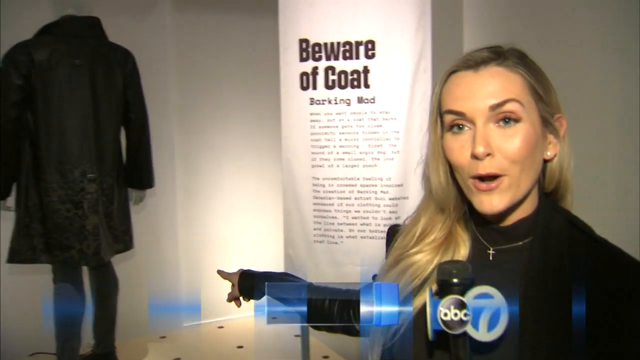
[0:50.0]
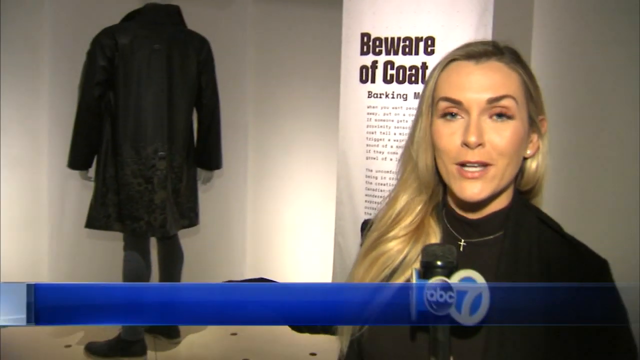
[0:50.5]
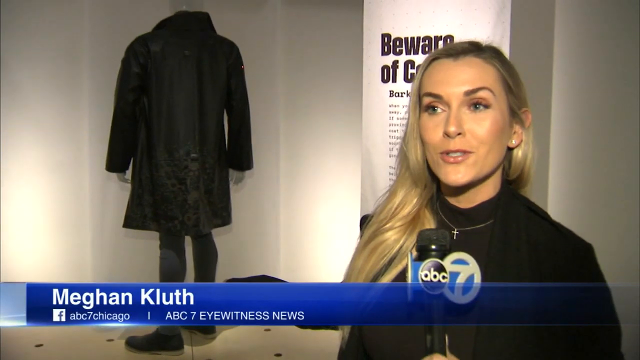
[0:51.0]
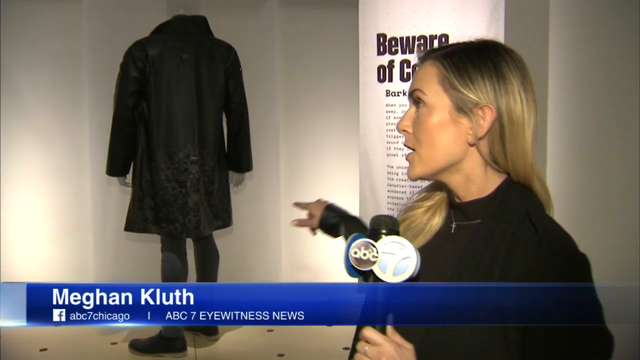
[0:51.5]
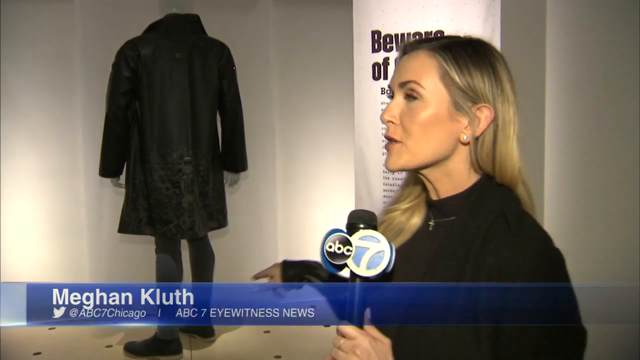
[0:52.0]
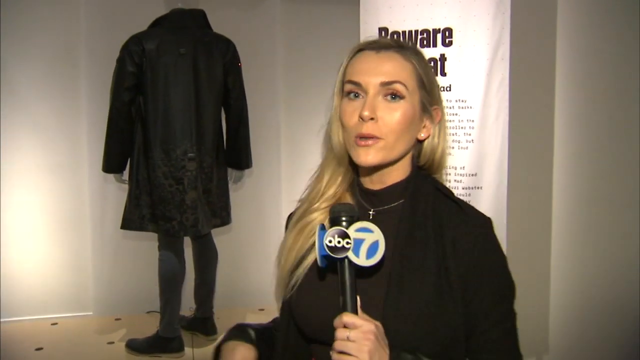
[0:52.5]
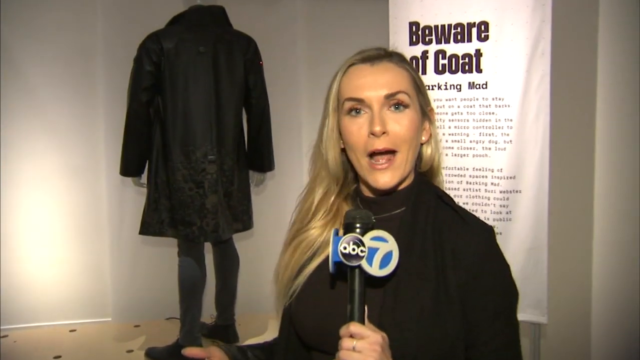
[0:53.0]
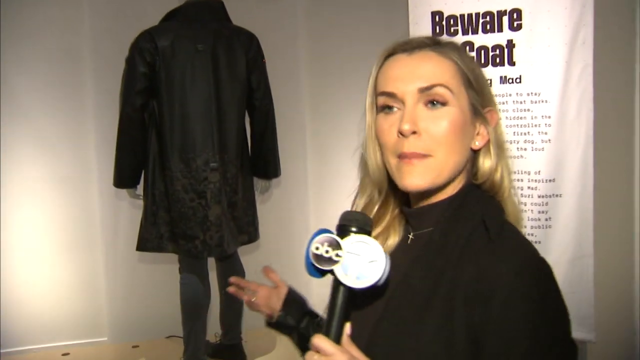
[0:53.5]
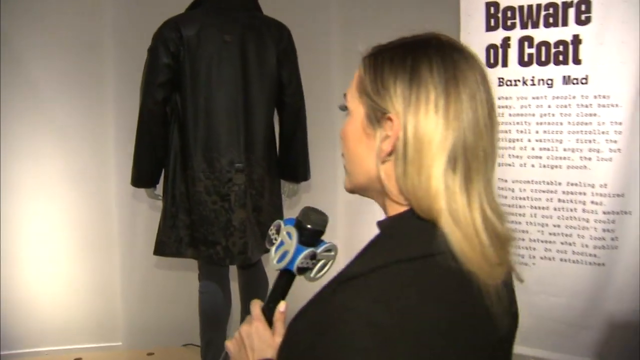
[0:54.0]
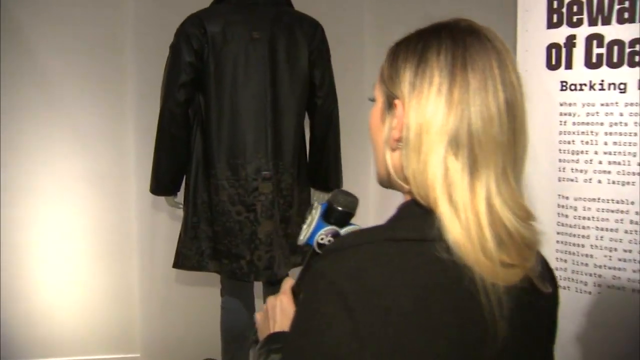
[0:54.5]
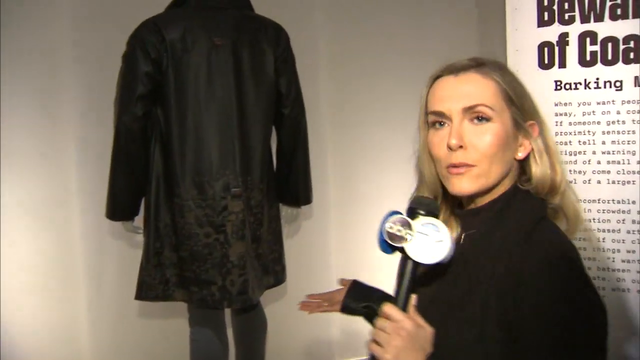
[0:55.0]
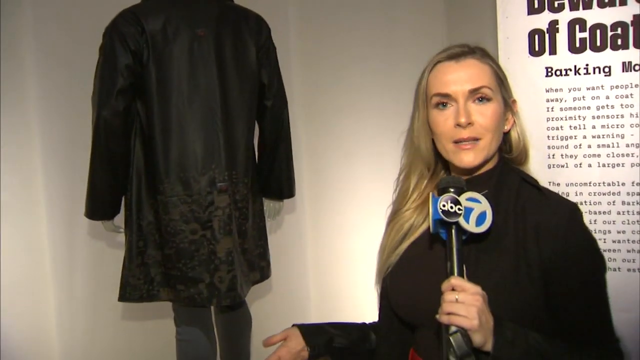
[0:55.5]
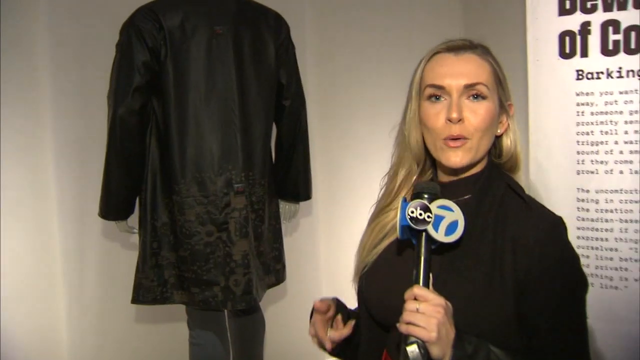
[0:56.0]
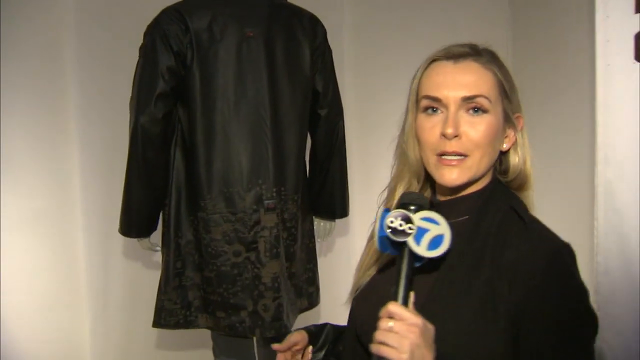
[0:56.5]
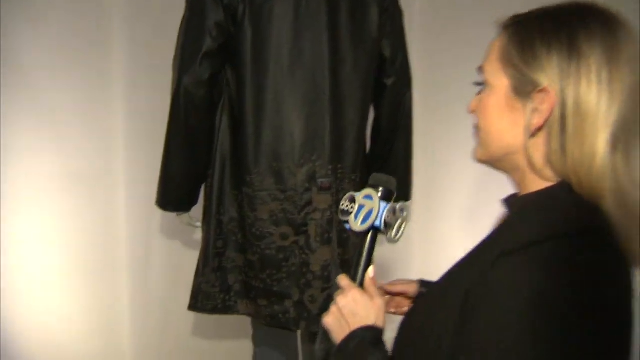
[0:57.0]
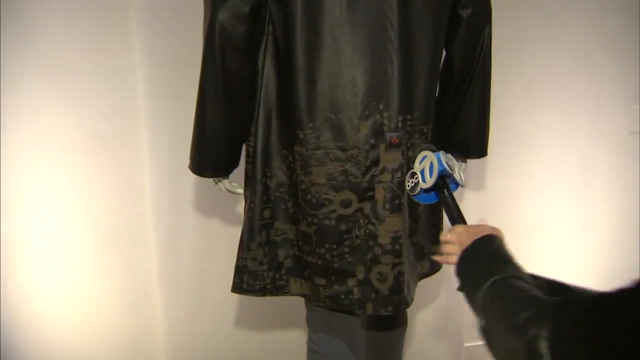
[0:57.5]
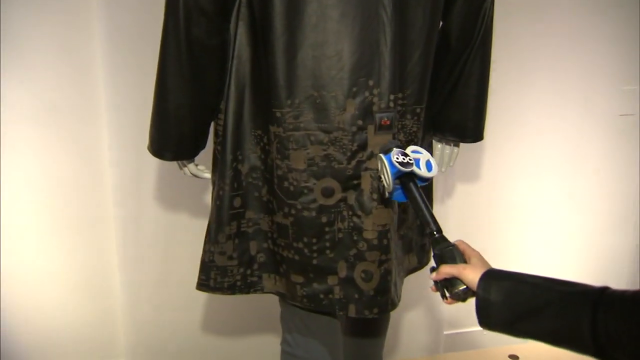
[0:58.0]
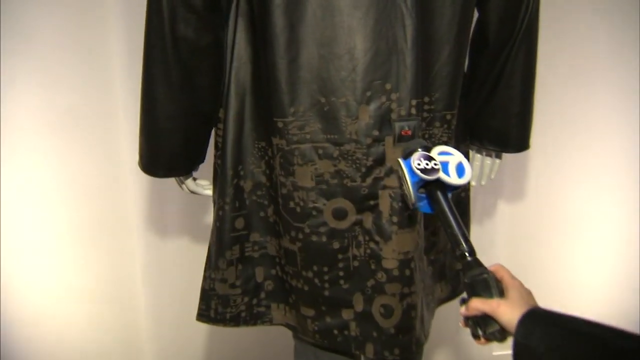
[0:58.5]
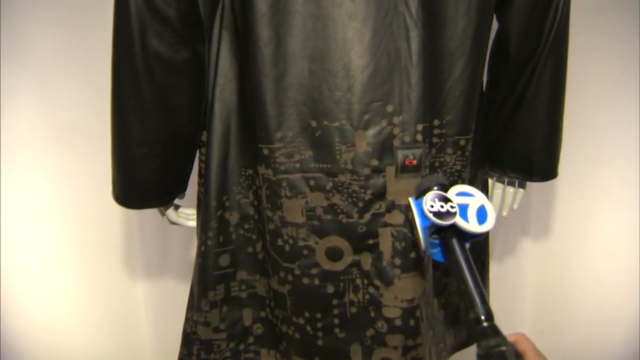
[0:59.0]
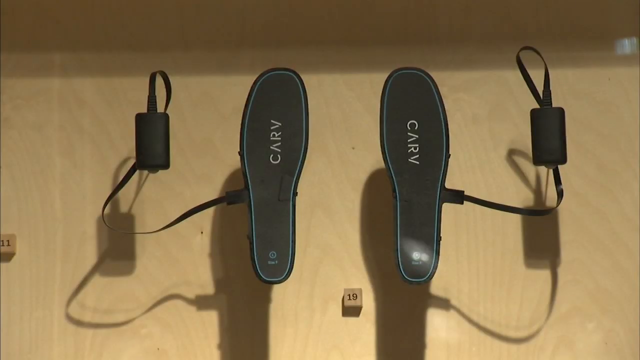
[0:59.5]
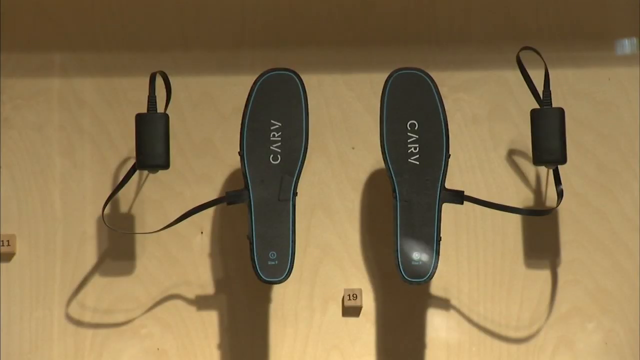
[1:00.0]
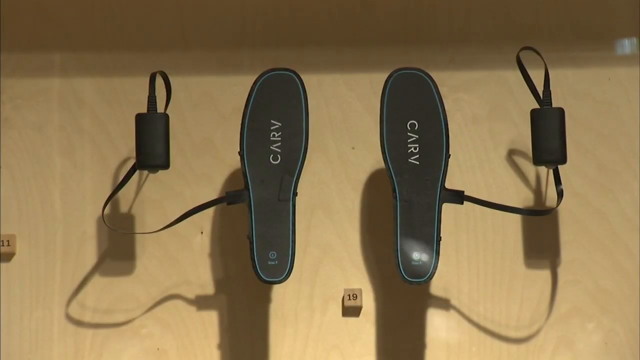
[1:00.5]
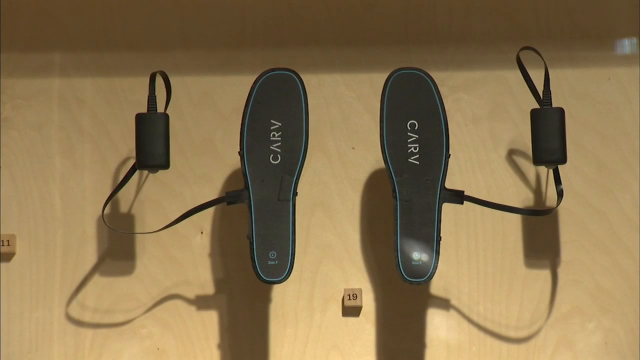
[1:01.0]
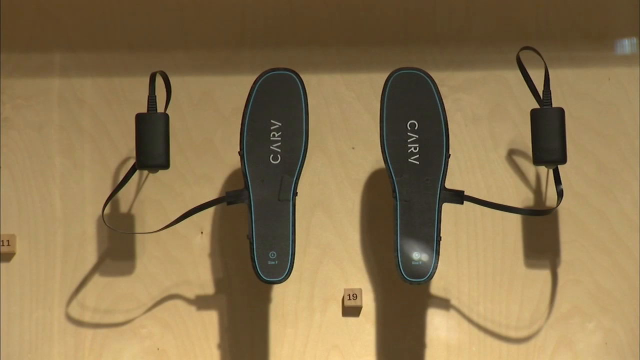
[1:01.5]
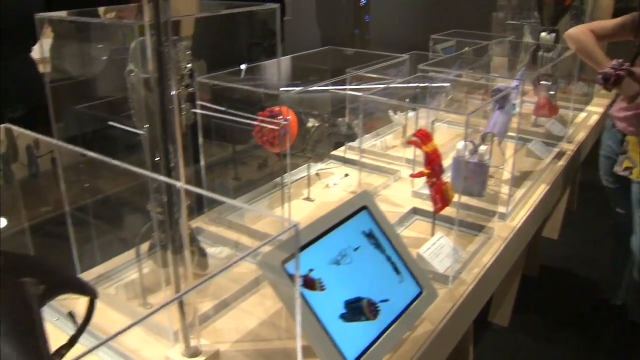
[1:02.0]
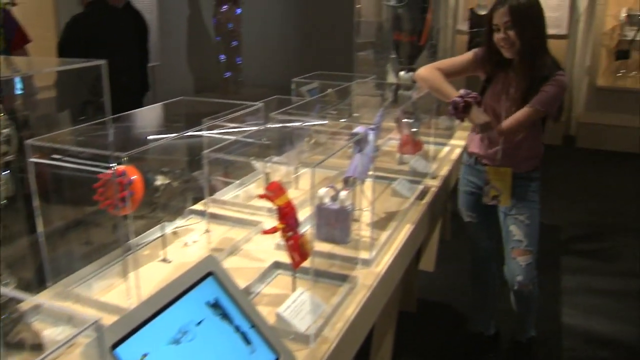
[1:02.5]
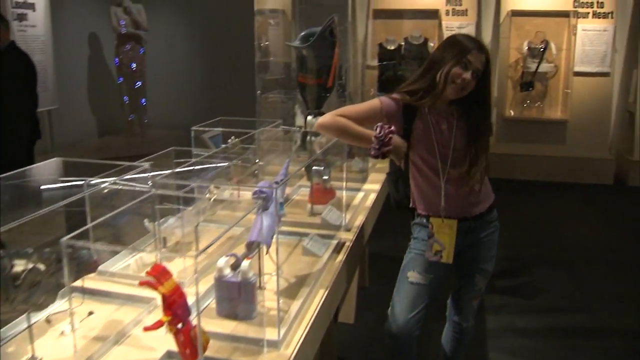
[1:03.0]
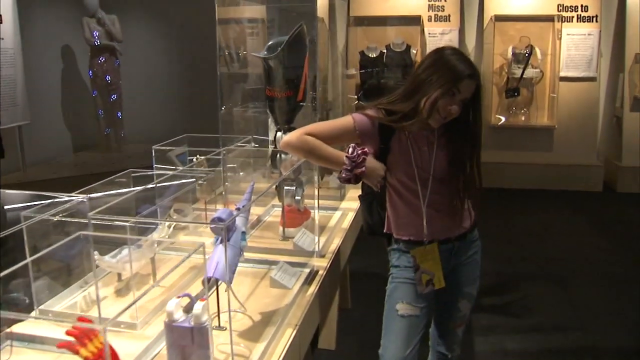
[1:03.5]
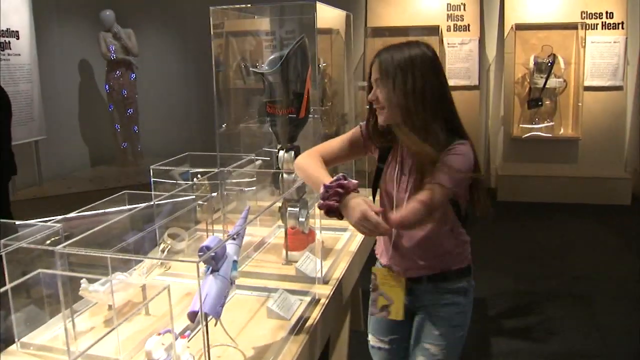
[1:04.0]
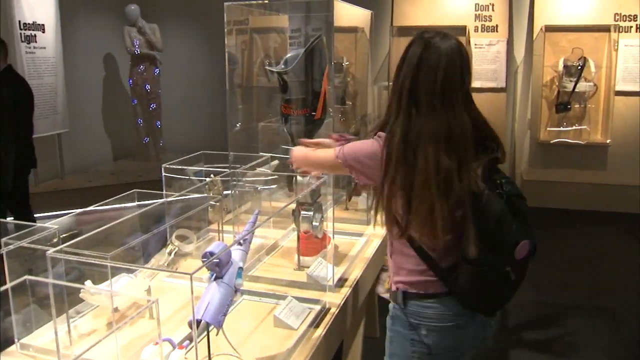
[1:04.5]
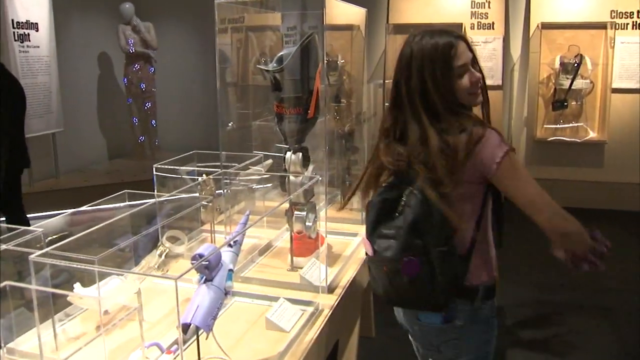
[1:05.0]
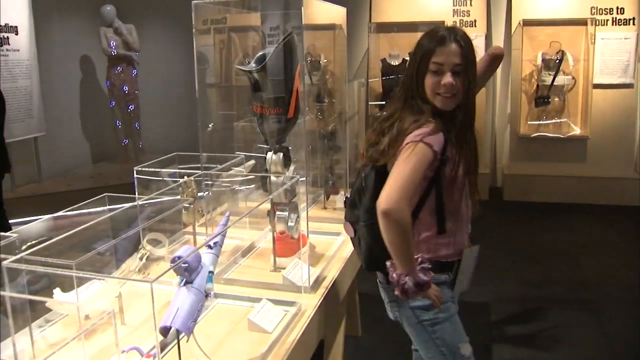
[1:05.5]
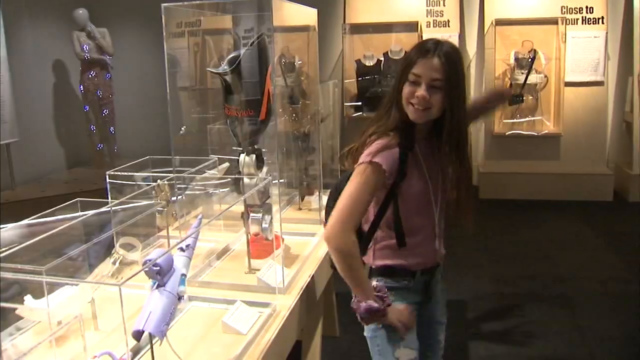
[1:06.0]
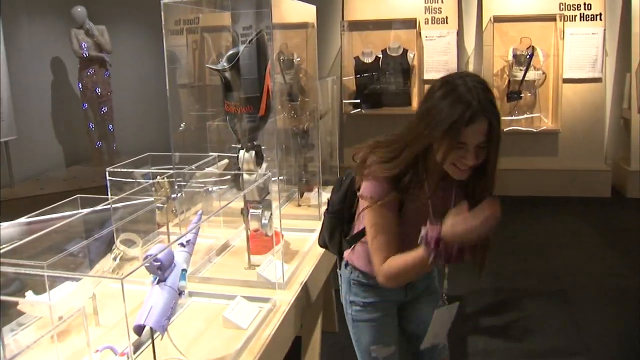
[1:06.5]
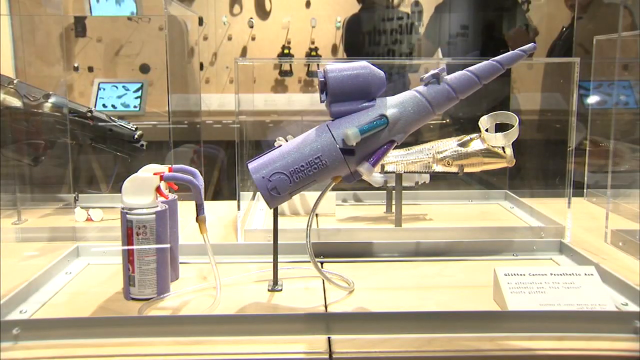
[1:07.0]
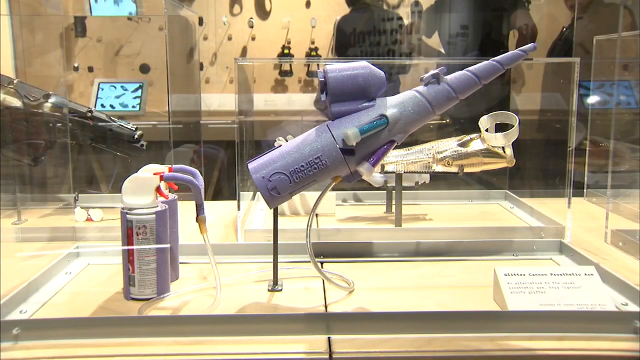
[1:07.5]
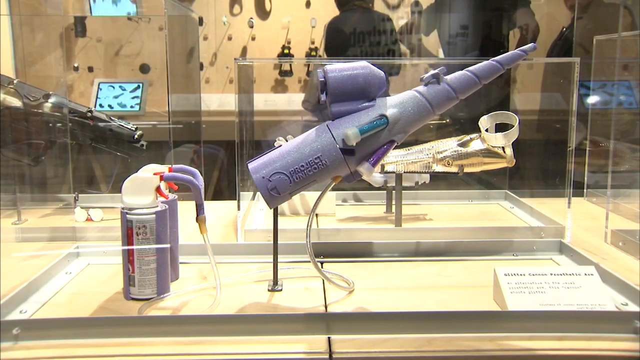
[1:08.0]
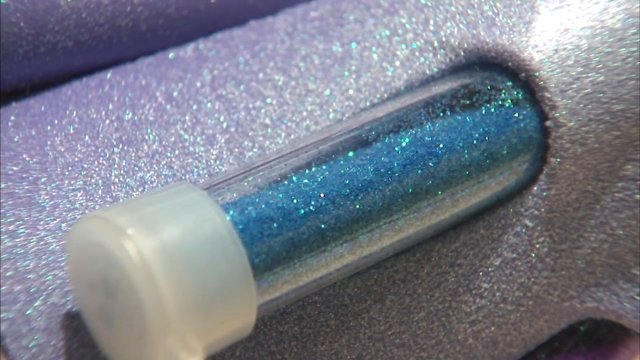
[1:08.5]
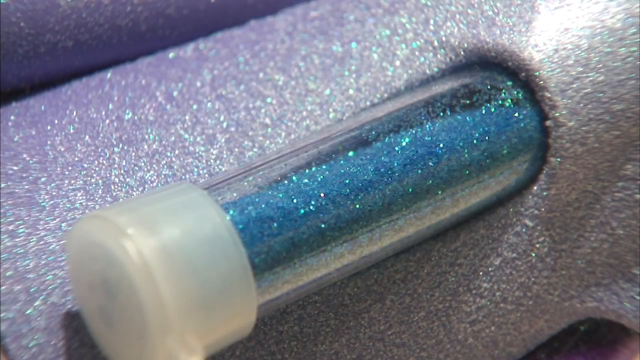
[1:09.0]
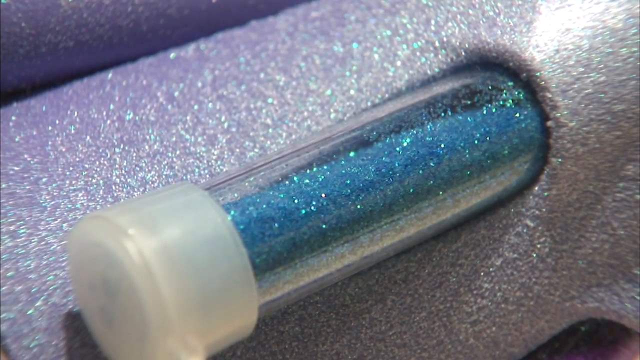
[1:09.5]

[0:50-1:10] The news reporter's name appears on the bottom of the screen as Megan Kruf, ABC7 Eyewitness News reporter. As she reports, she shows off a specific exhibit with a black coat, with the title "Beware of Coat" on the column in the back. She comes up closer to it while talking and puts the microphone close to the coat. The video then shows another exhibit featuring some foot padding. A girl with an amputated arm dances around and poses in front of more exhibits and displays in cases, and one of them, a purple one, is shown up close in detail. The girl is then briefly shown being interviewed and talking.